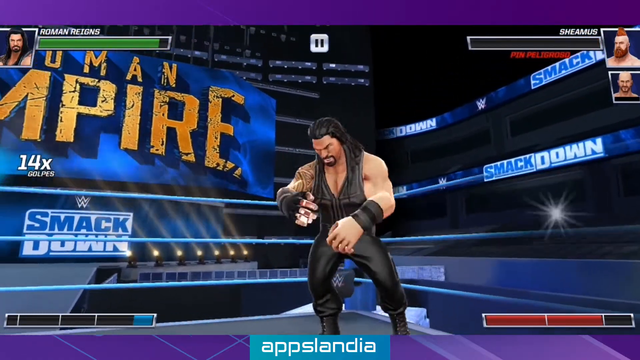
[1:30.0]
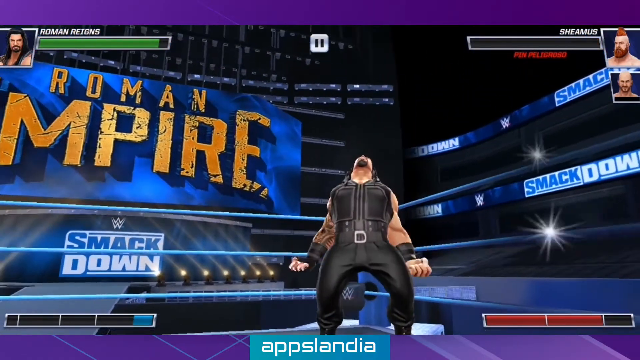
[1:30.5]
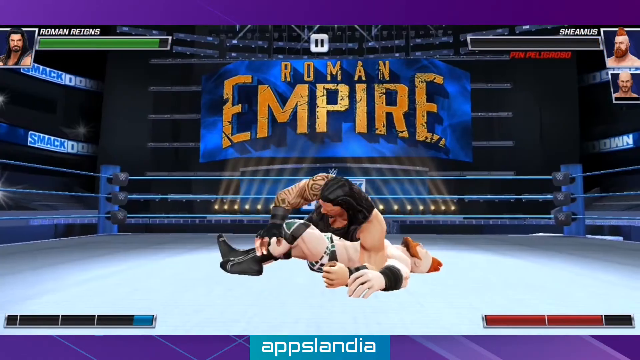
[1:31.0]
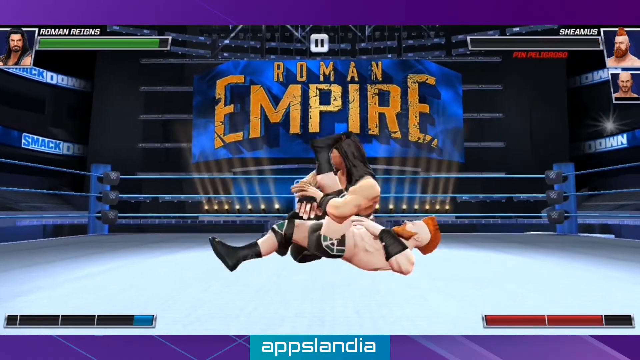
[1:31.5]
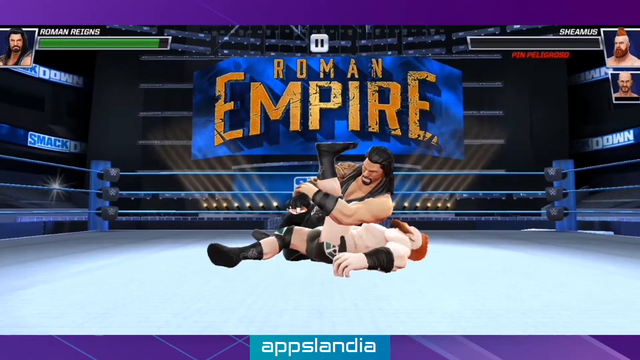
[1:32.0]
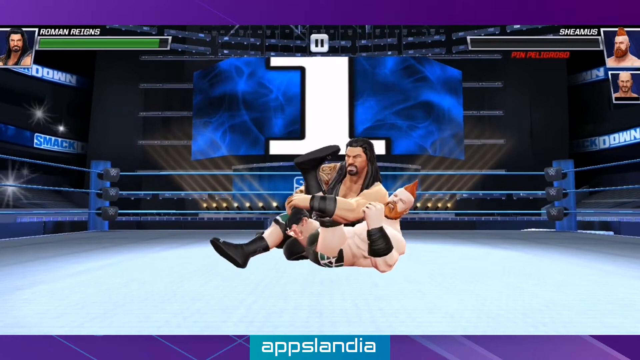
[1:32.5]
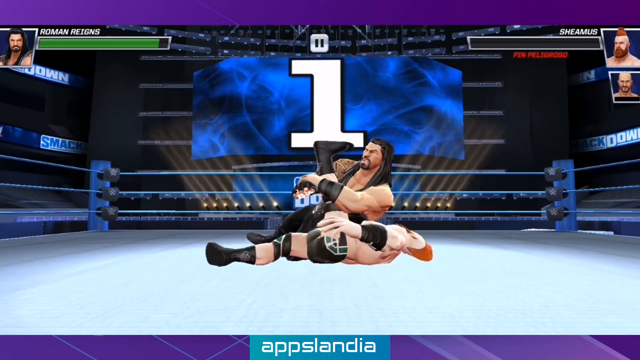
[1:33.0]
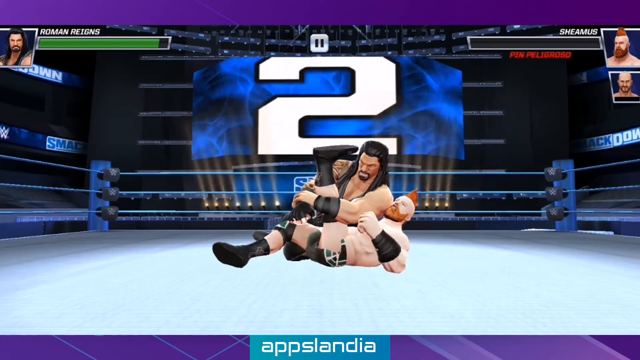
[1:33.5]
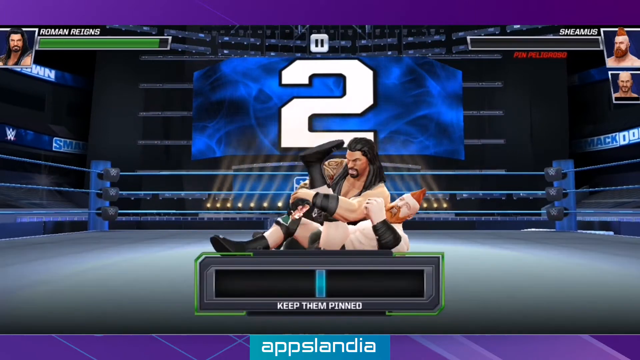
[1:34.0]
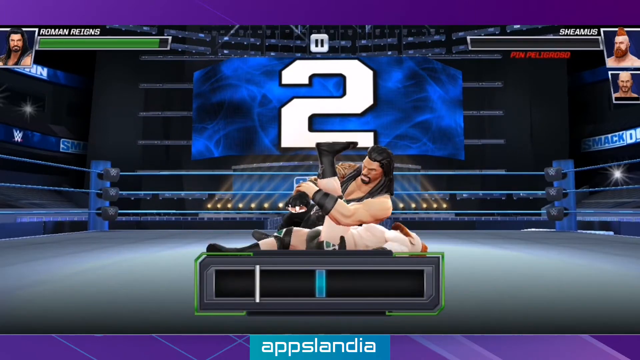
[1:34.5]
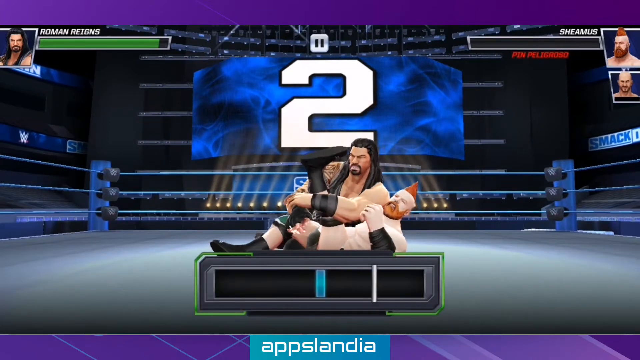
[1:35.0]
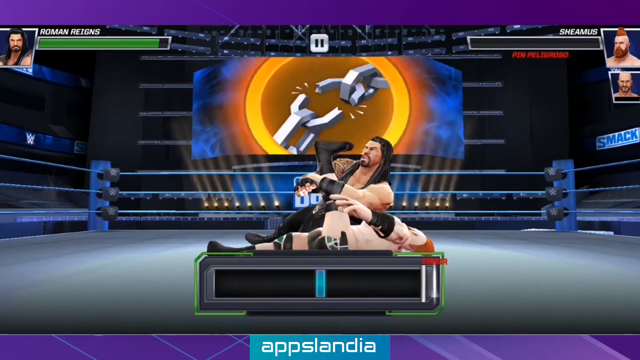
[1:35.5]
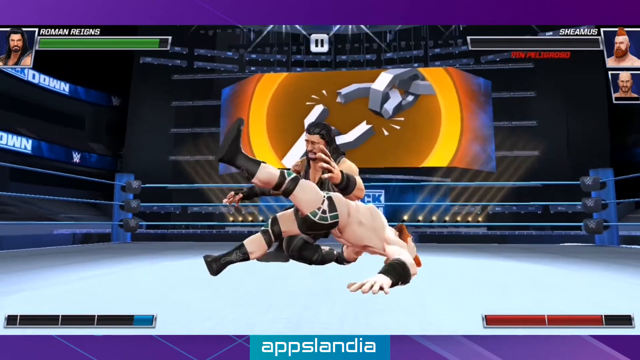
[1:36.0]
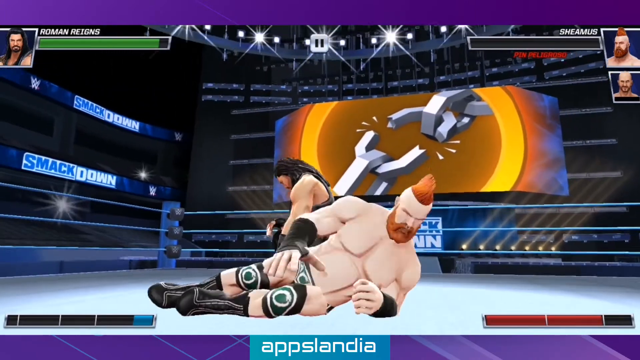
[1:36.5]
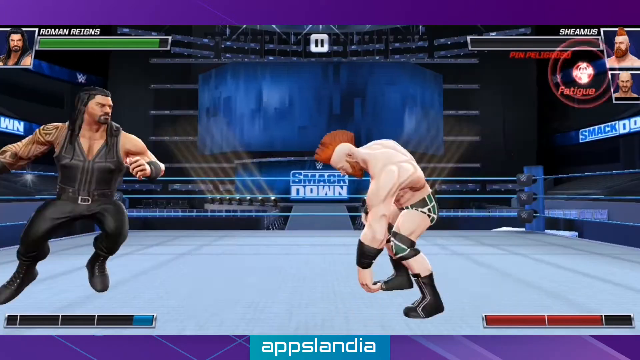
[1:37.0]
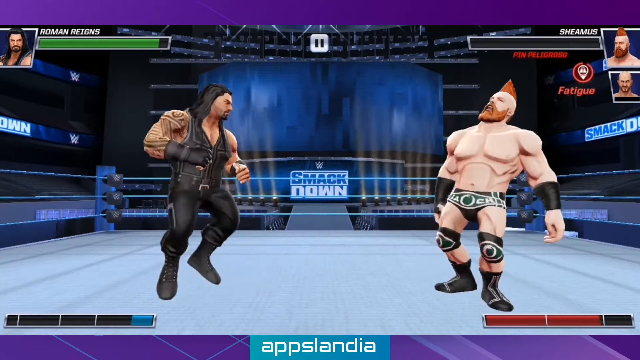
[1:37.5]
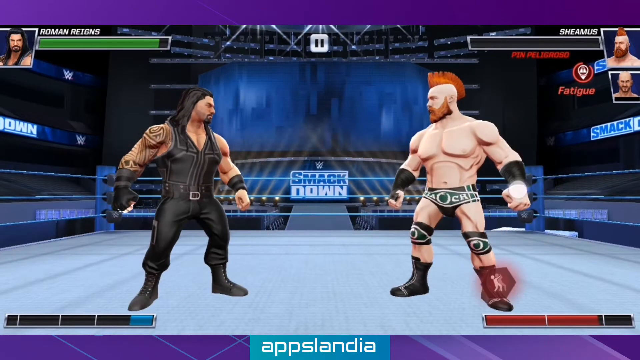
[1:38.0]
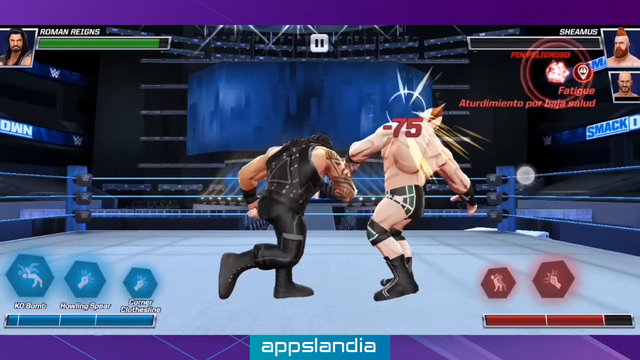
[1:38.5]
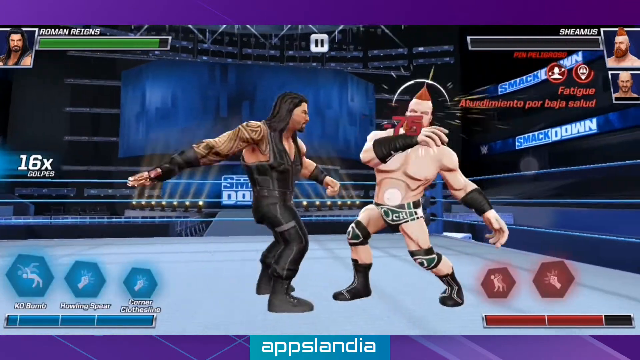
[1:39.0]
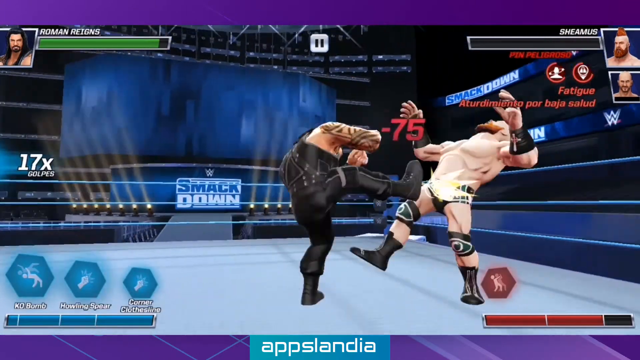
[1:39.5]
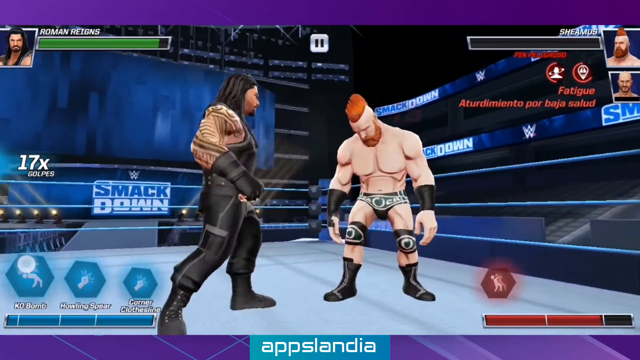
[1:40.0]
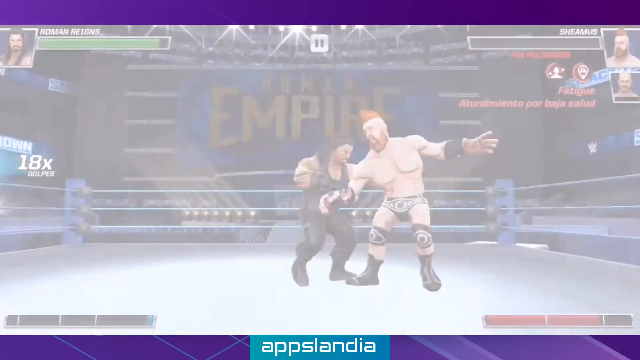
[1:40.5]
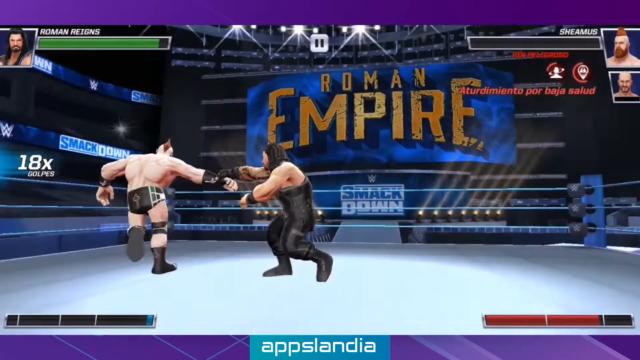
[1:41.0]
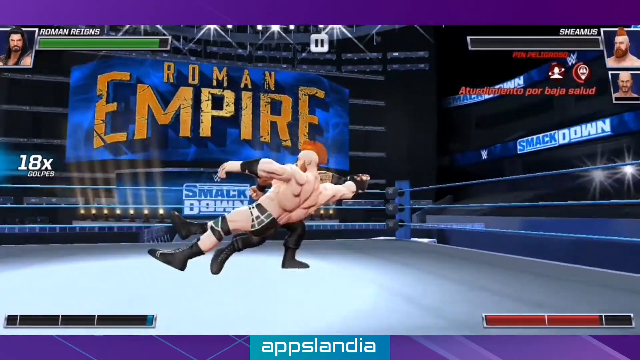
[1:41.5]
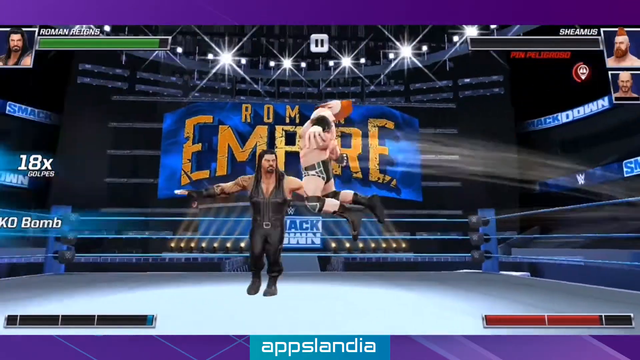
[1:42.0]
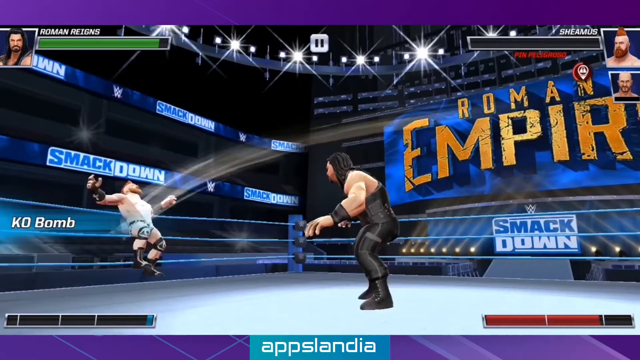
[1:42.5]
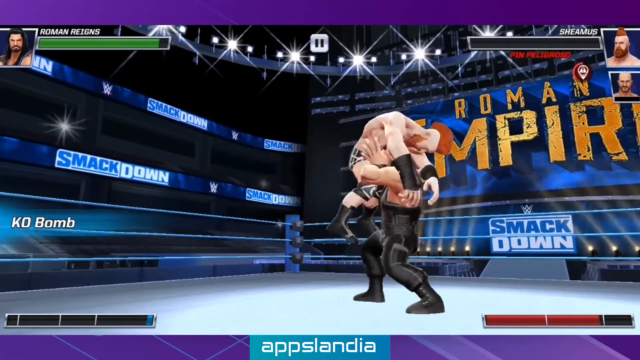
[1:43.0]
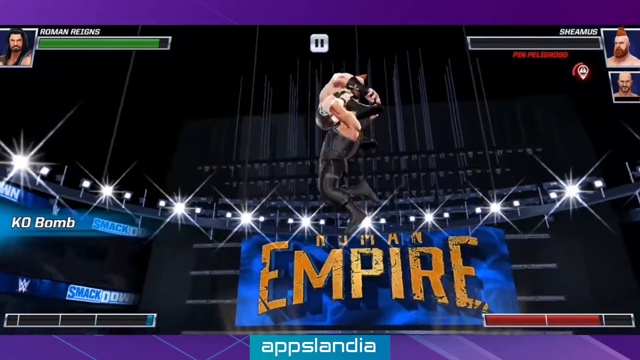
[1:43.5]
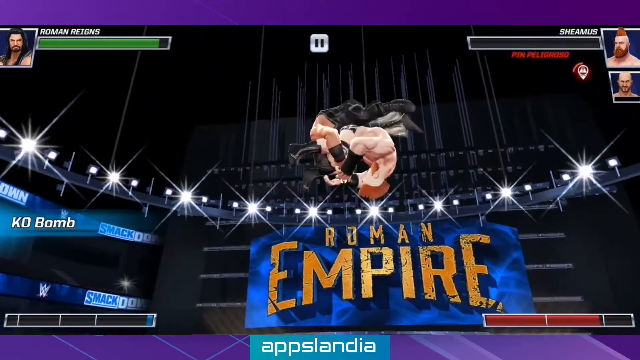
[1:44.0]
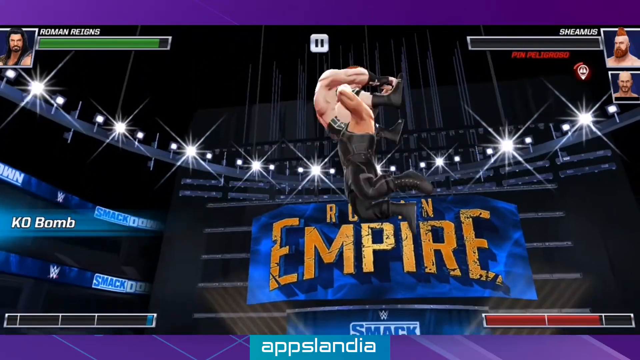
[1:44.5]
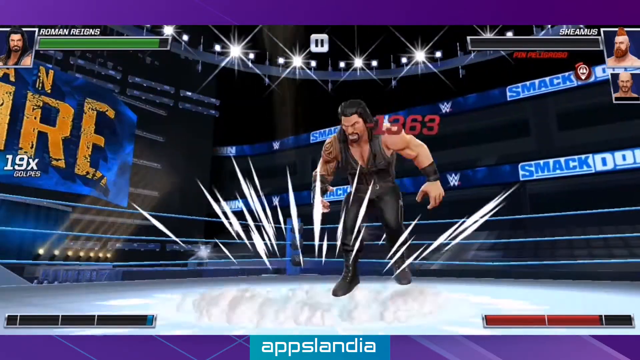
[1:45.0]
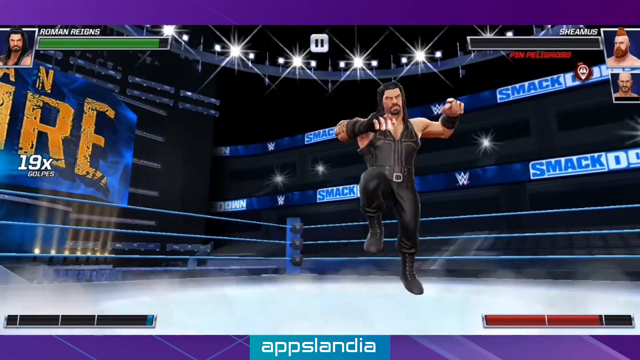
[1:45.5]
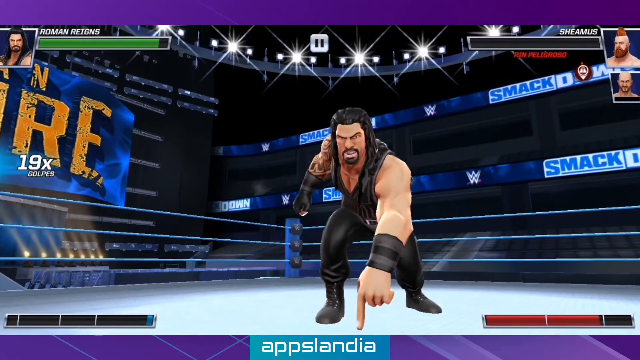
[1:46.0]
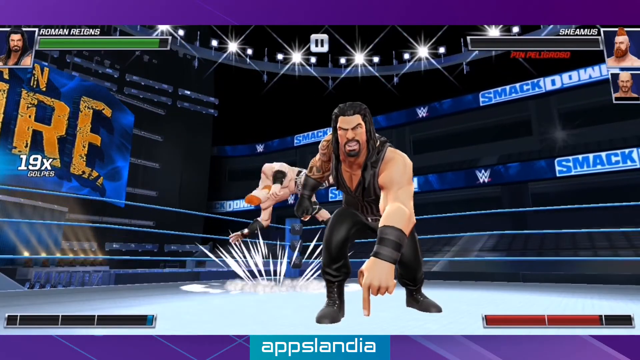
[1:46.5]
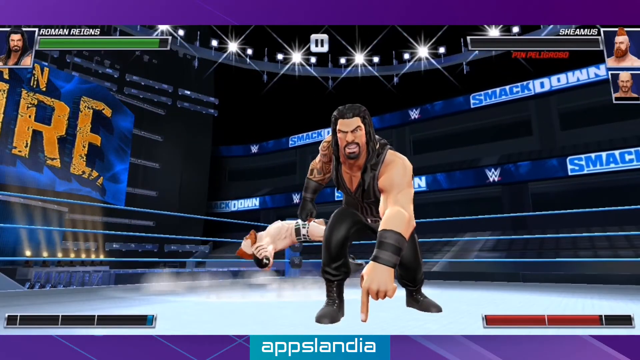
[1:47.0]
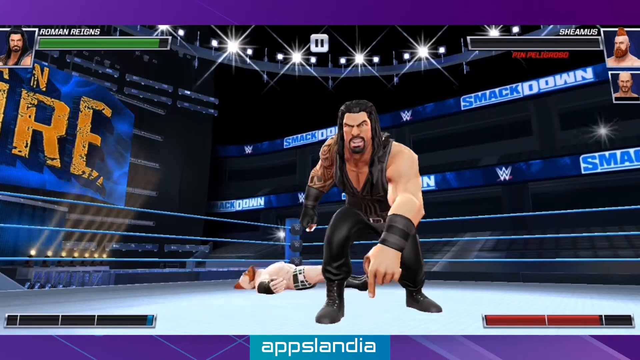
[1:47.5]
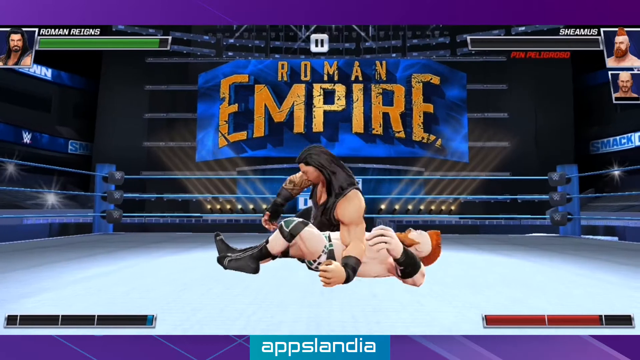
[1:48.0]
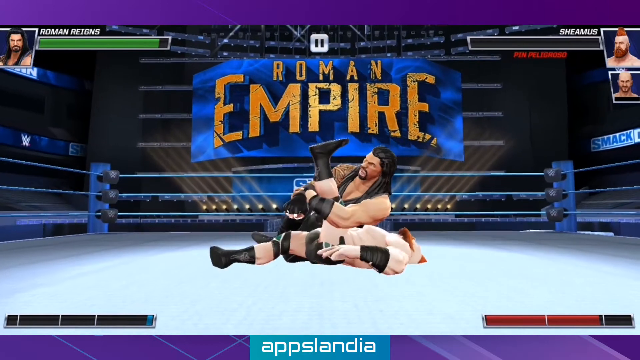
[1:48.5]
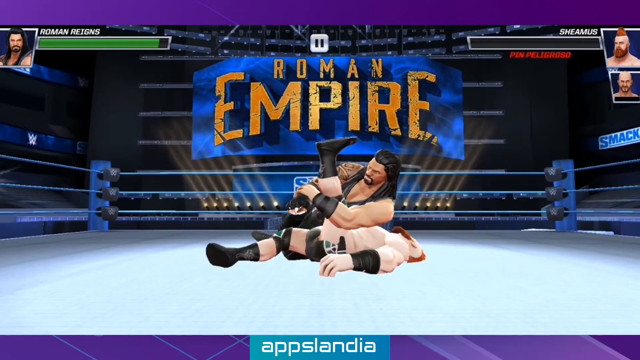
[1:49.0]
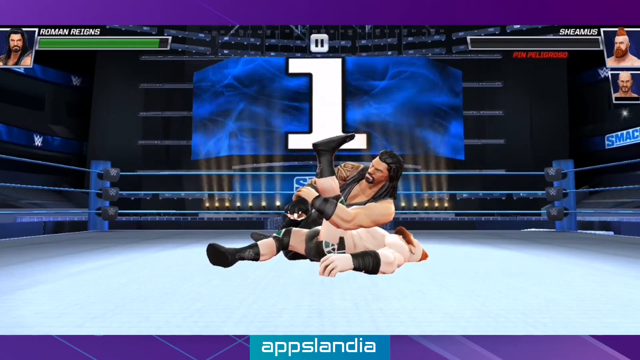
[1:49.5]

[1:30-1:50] Player one looks about to pin player two, but the opponent breaks the pin and is back up fighting. The opponent gets slammed again and is about to be pinned again, with a count of one before the shot ends. No timer is visible on screen.